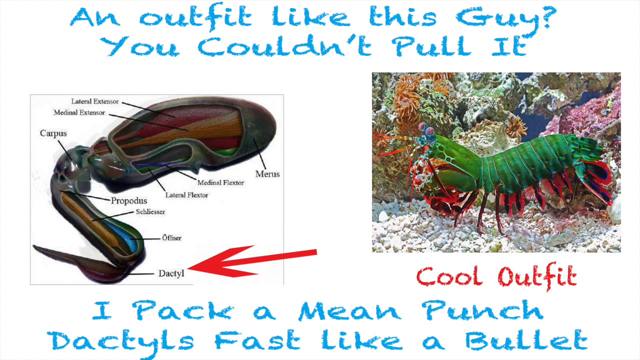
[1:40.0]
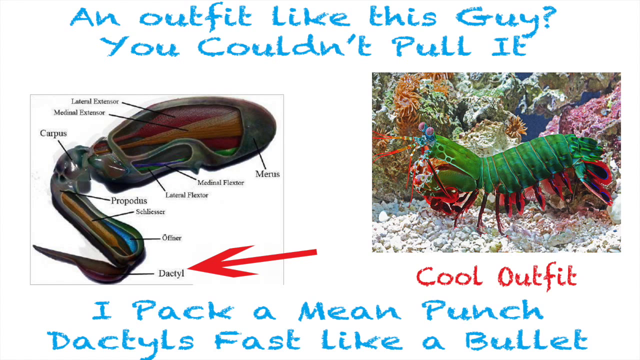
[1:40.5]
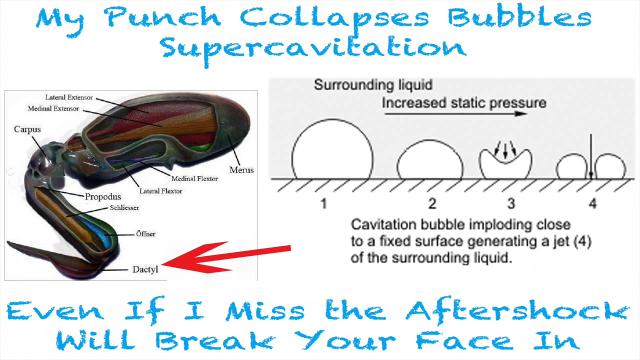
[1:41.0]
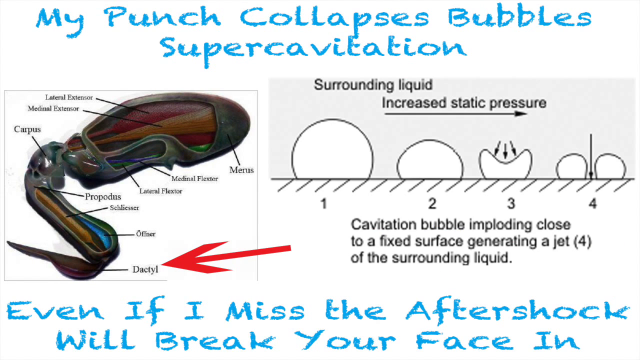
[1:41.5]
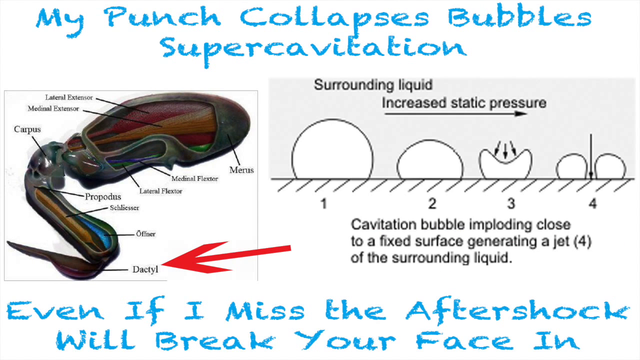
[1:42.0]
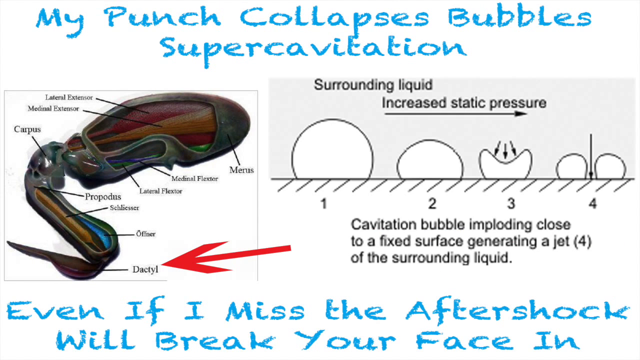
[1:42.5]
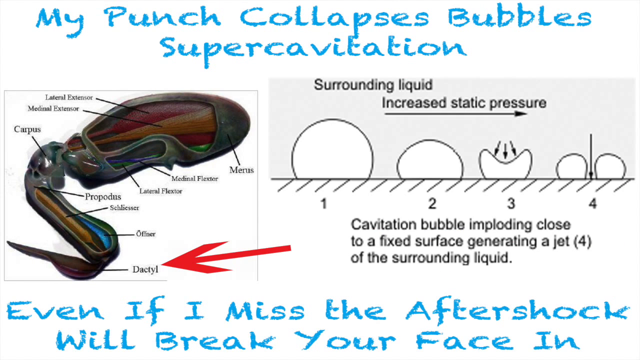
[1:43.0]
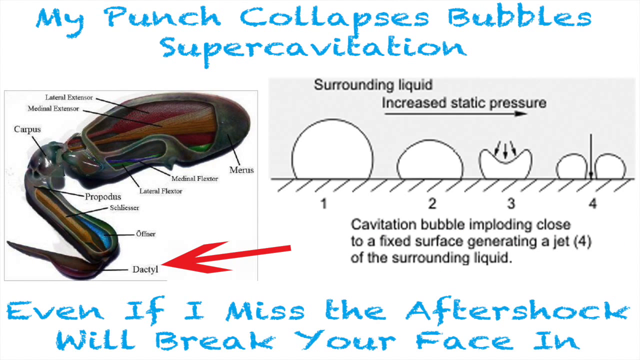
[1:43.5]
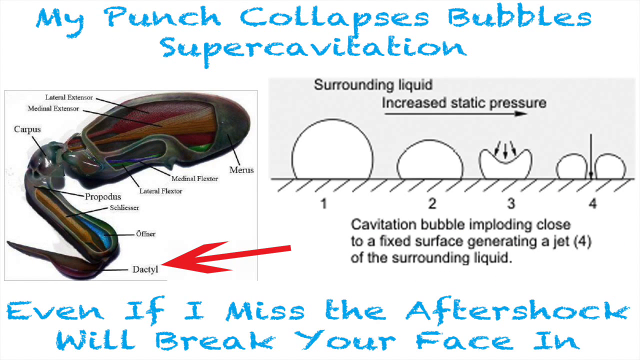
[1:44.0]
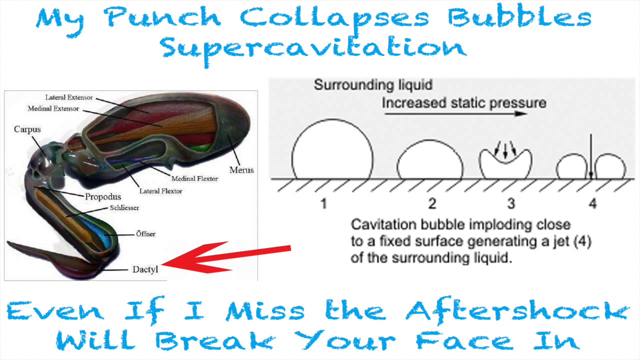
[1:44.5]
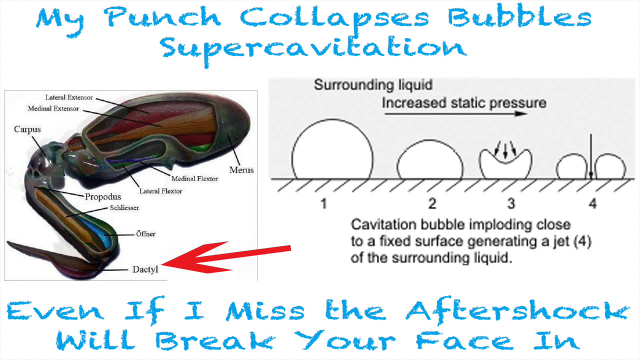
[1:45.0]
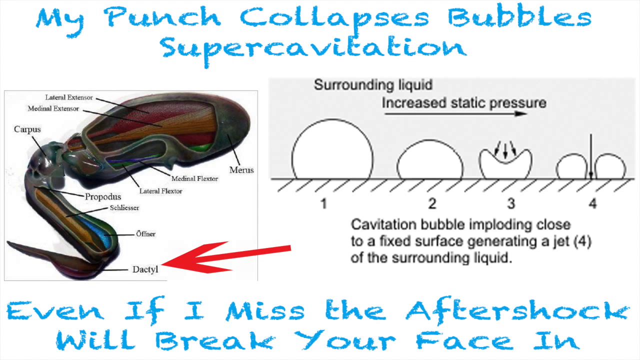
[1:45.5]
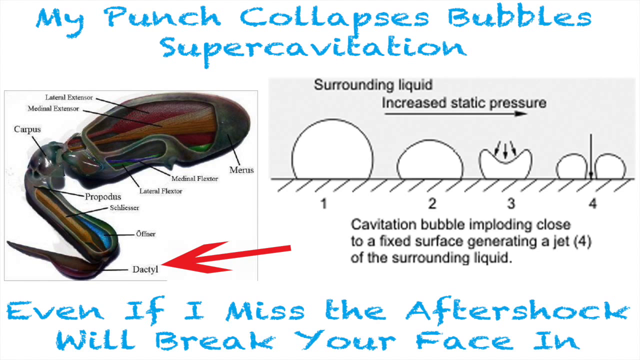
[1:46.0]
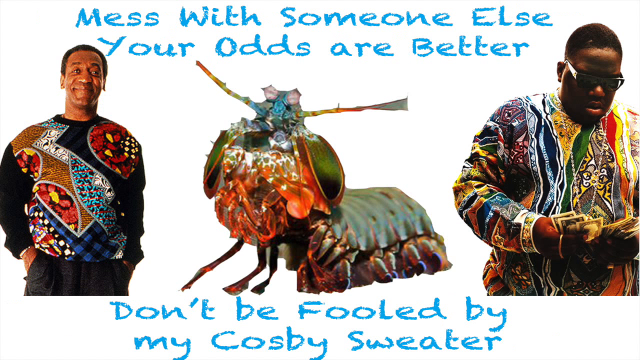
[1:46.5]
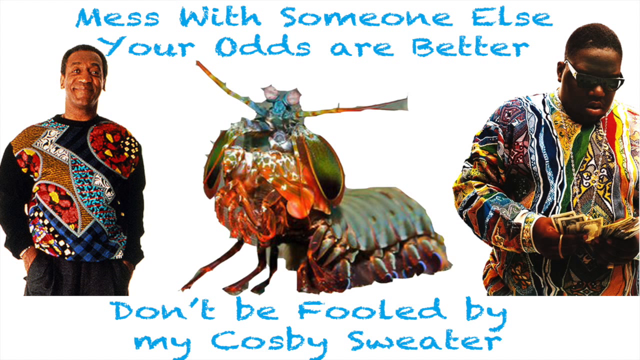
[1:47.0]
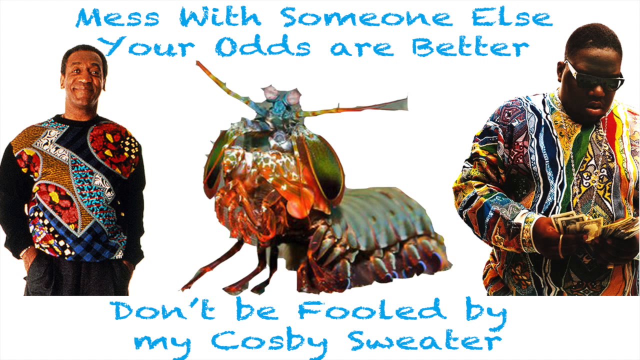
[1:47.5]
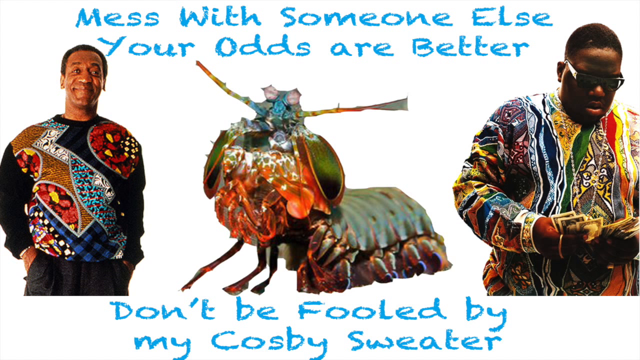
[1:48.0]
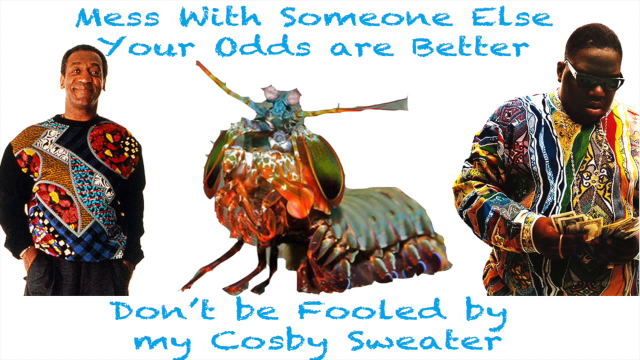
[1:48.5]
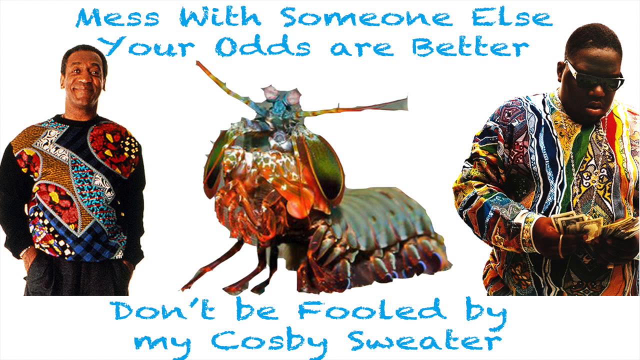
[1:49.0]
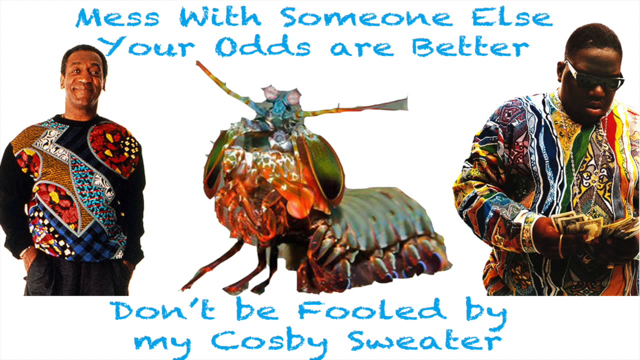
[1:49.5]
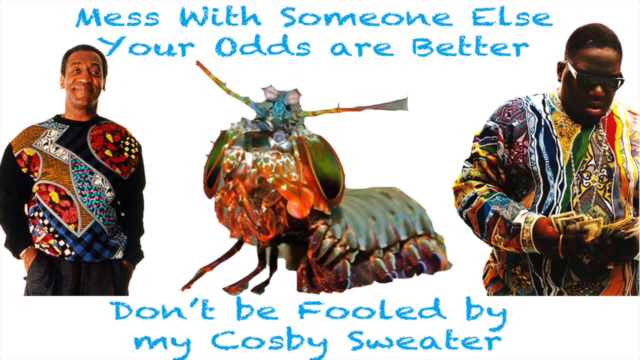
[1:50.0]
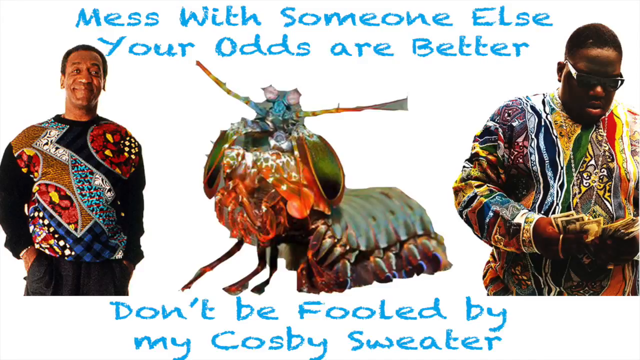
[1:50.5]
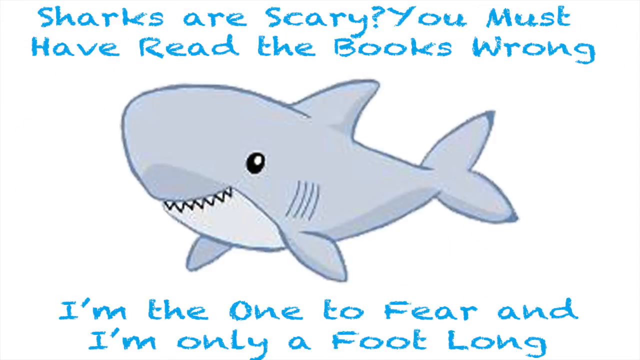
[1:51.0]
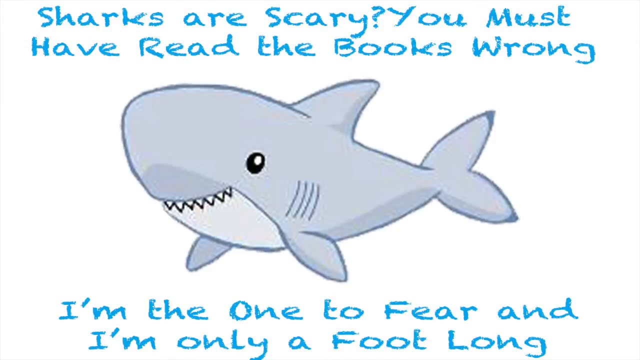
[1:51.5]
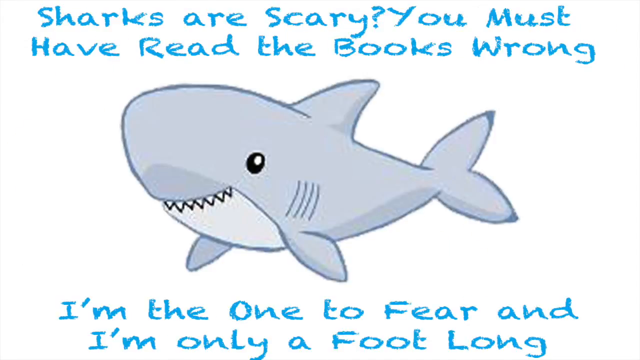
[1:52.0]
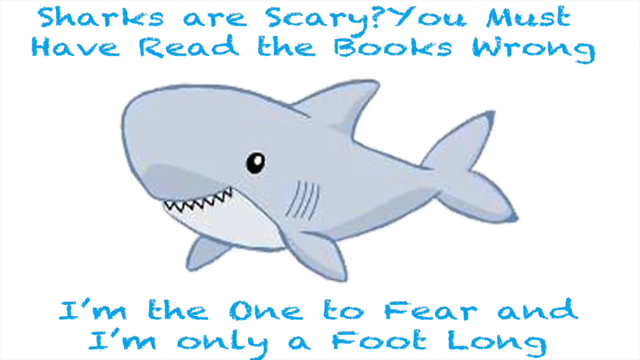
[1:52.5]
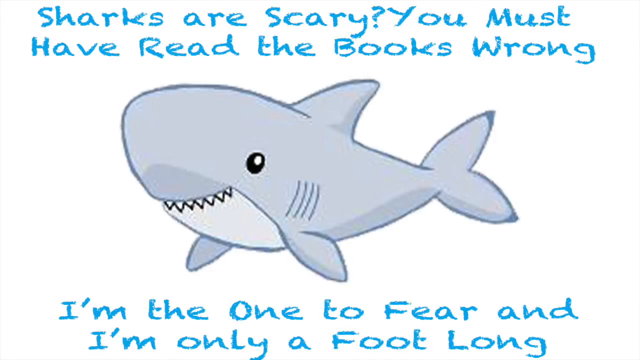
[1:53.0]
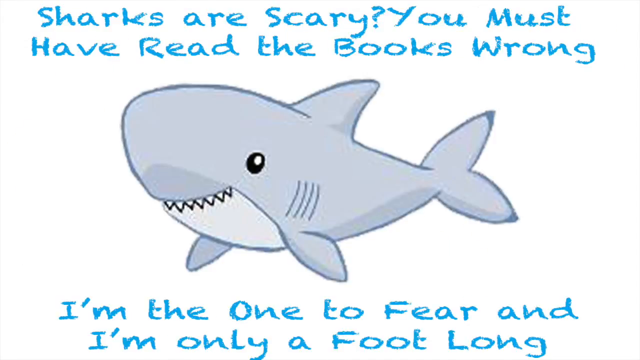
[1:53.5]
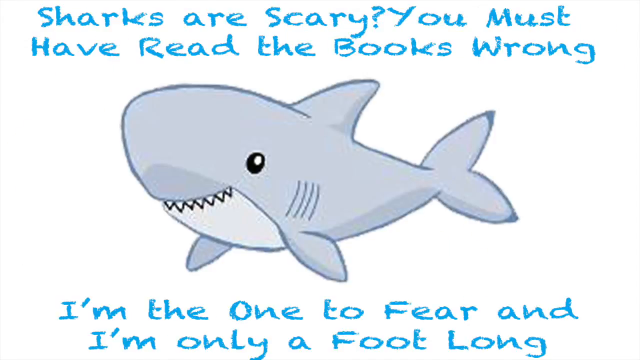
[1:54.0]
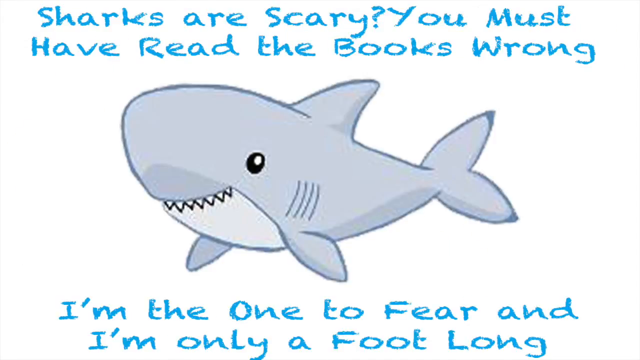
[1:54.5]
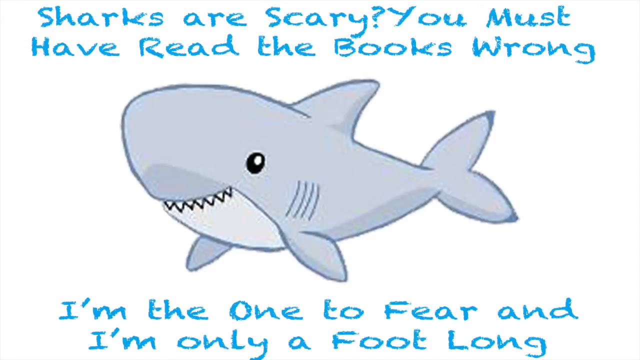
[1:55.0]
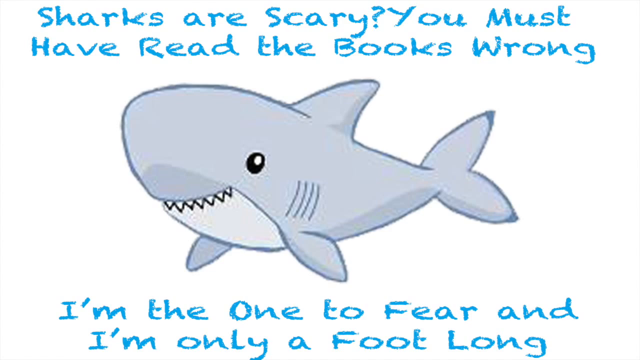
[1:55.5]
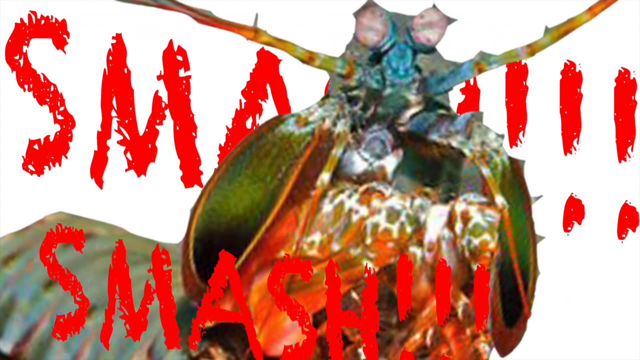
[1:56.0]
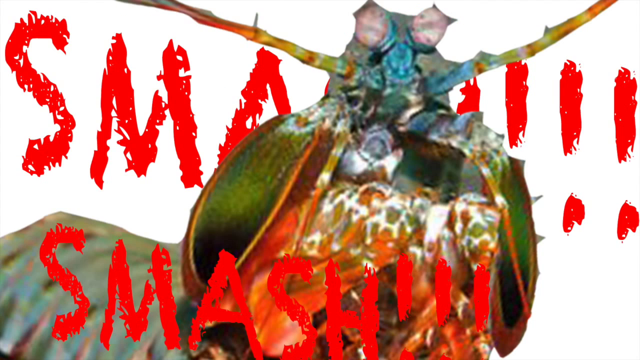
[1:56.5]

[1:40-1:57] An image has the text "my punch, collapses, bubbles, super cavitation" on top. Below it are two images: an unidentified one with its different parts labelled, and on the right two circles labelled "surrounding liquid" and "increased static pressure". Below the right-side image is text beginning "cavitation bubble floating close to a fixed surface, generating a jet", and below that the text "even if I missed the aftershock, will break your face in." Another image contains three pictures: on the left a clean-shaven guy wearing a shirt with a different design, in the middle a peacock shrimp, and on the right a big black guy wearing glasses and holding cash in his hands. The text on top reads "mess with someone else, your odds are better" and below it "don't be fooled by my cosby's sweater." The next image shows a shark in the middle, with "sharks are scary? You must have read the books wrong." above and "I'm the one to fear and I'm only a foot long" below. The final image shows the peacock shrimp with the text "smash, smash!" written in a big red font.